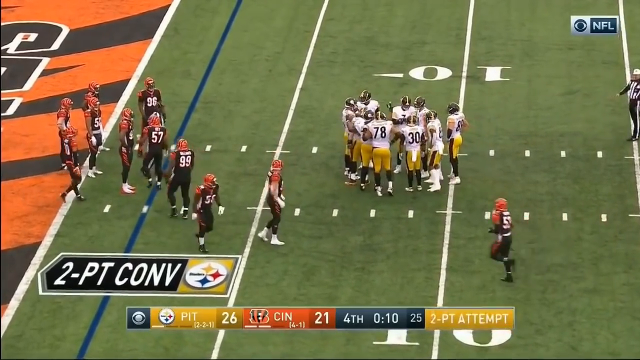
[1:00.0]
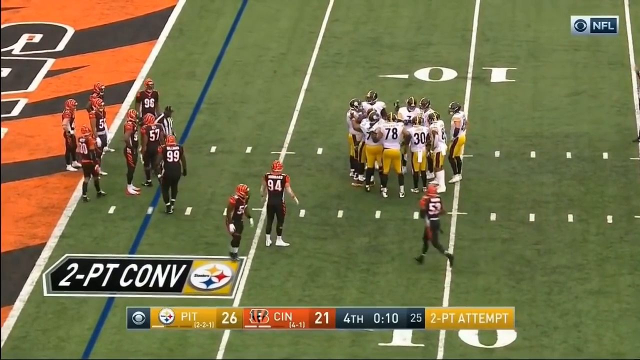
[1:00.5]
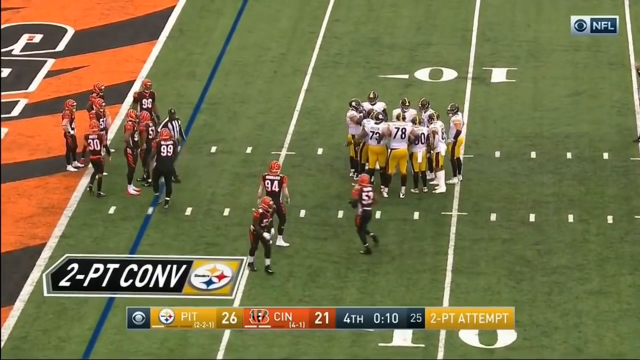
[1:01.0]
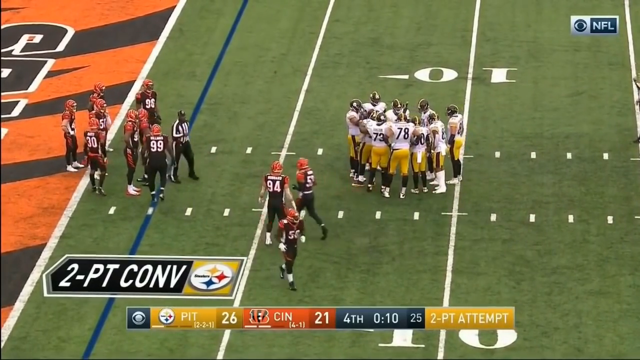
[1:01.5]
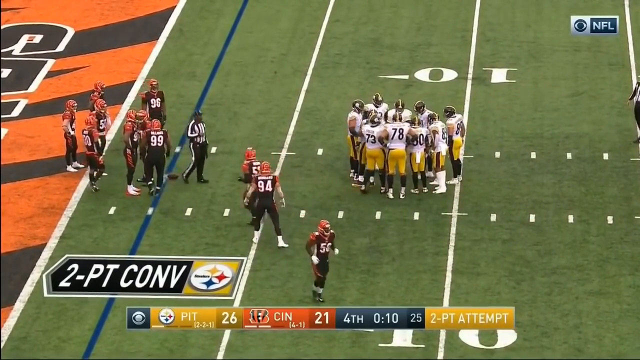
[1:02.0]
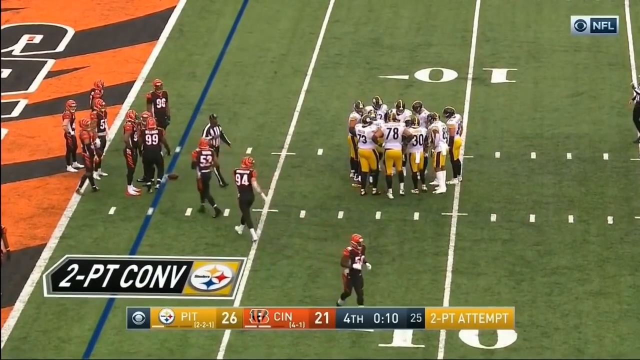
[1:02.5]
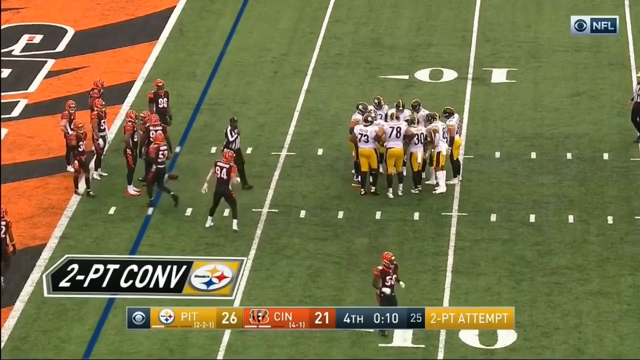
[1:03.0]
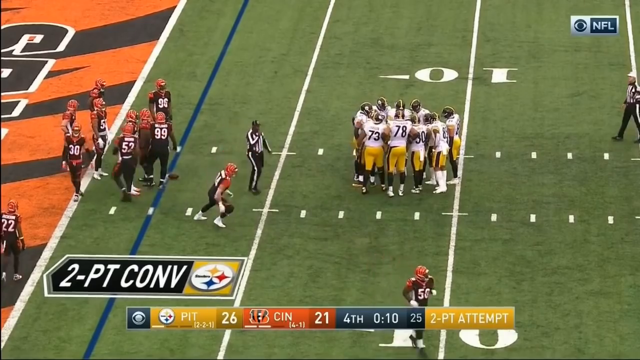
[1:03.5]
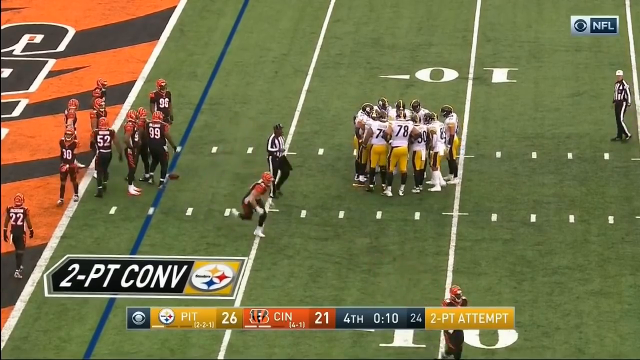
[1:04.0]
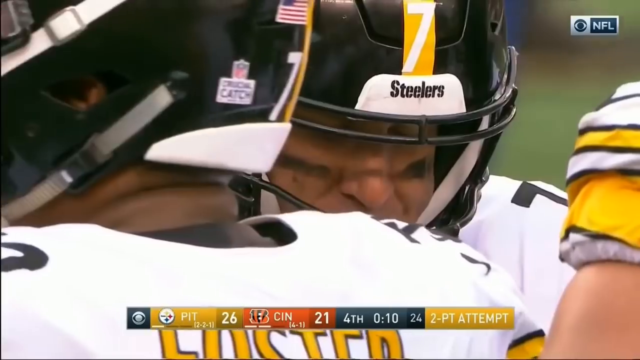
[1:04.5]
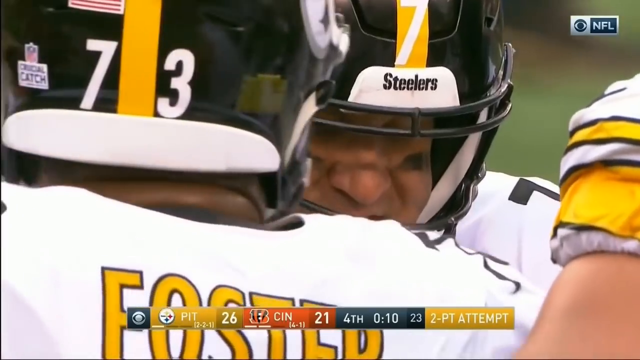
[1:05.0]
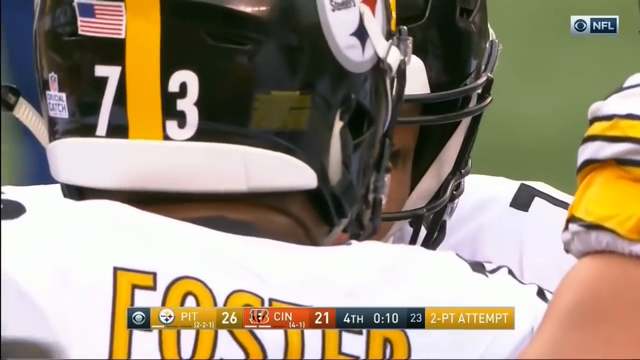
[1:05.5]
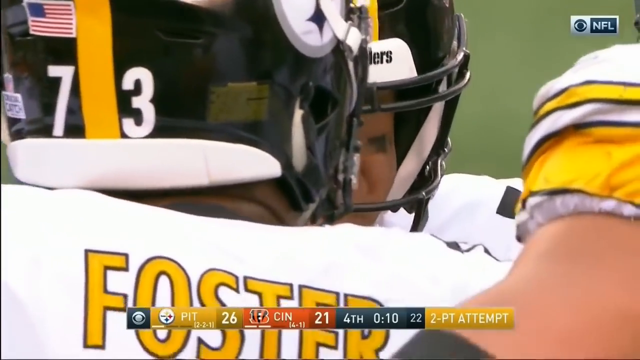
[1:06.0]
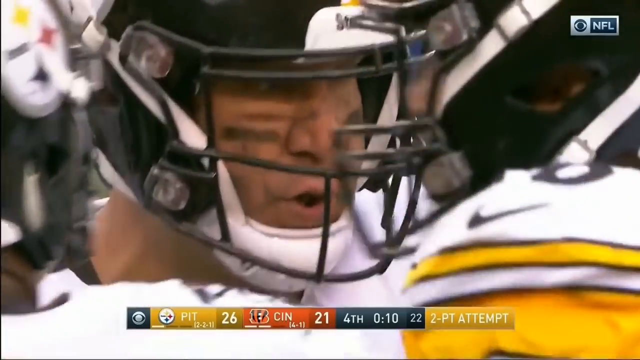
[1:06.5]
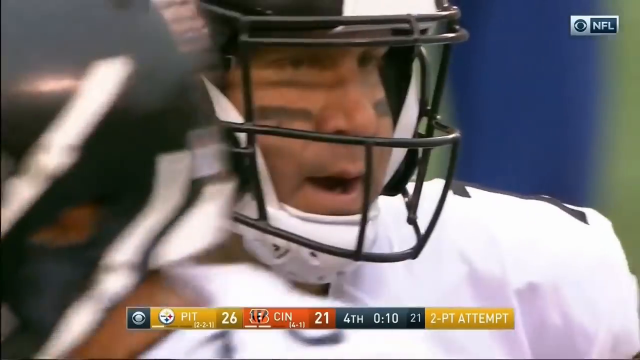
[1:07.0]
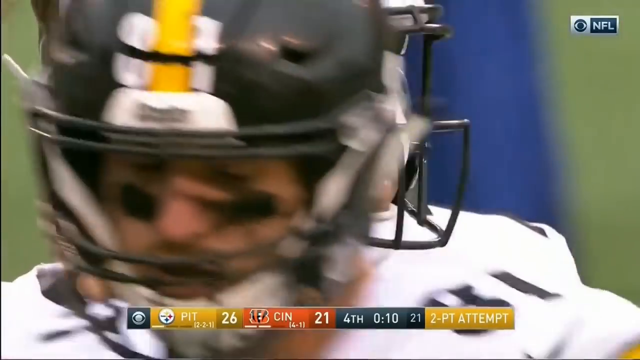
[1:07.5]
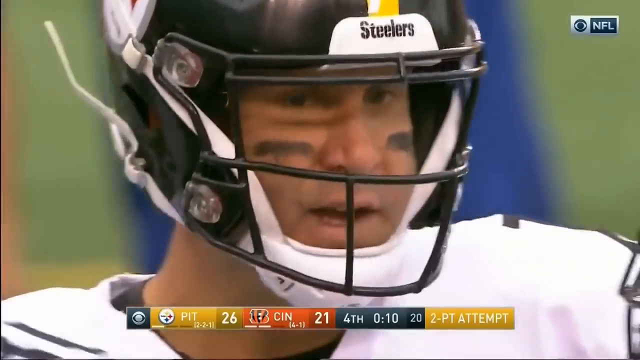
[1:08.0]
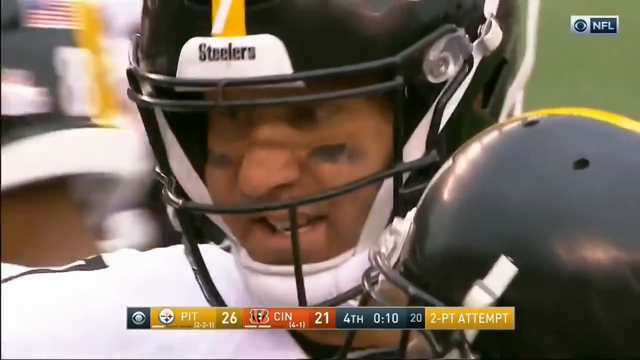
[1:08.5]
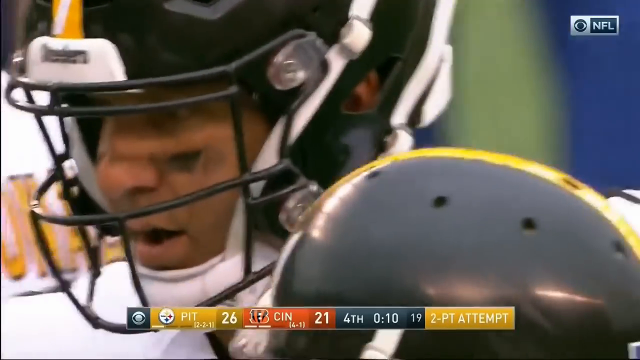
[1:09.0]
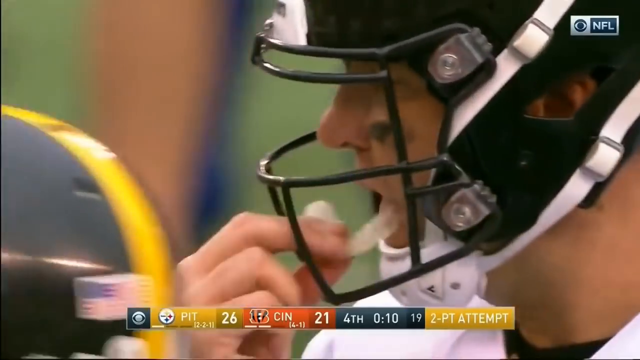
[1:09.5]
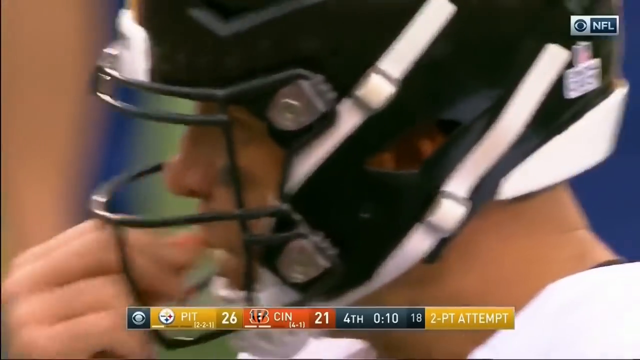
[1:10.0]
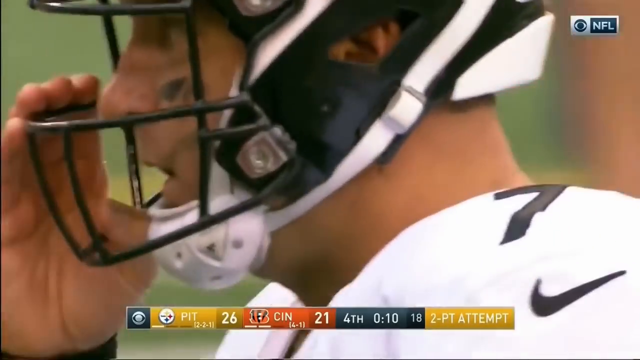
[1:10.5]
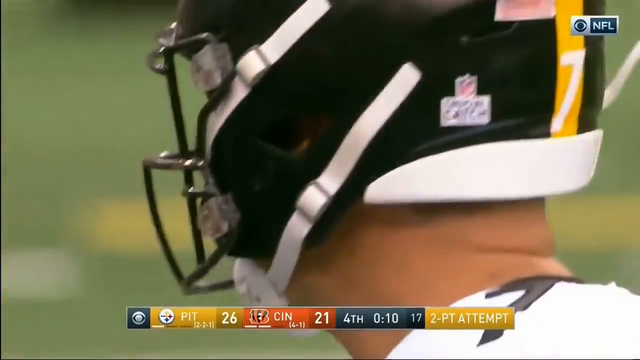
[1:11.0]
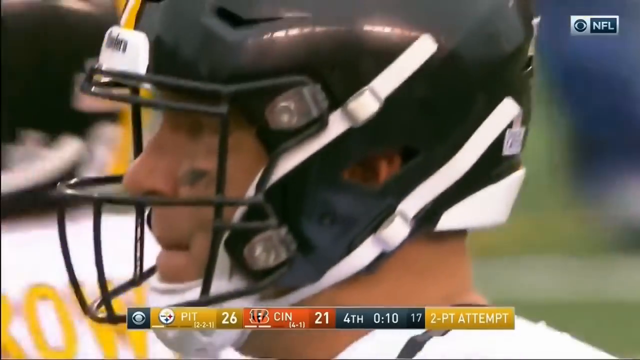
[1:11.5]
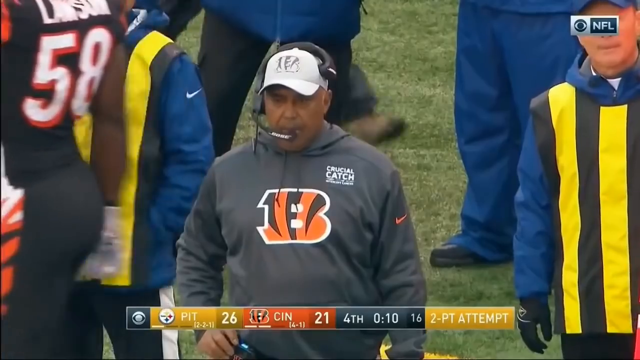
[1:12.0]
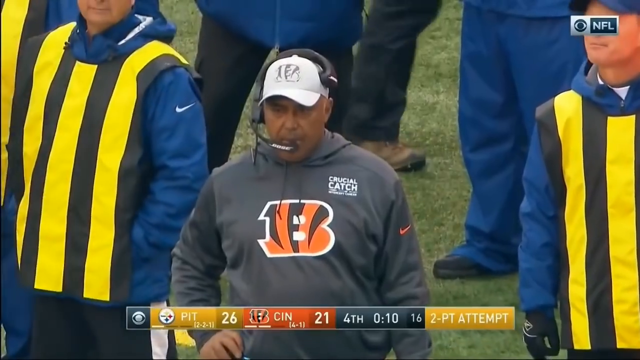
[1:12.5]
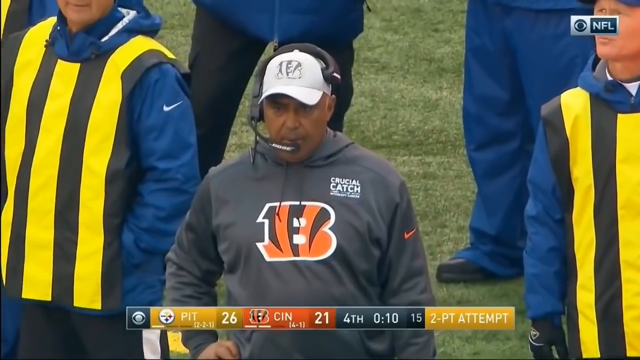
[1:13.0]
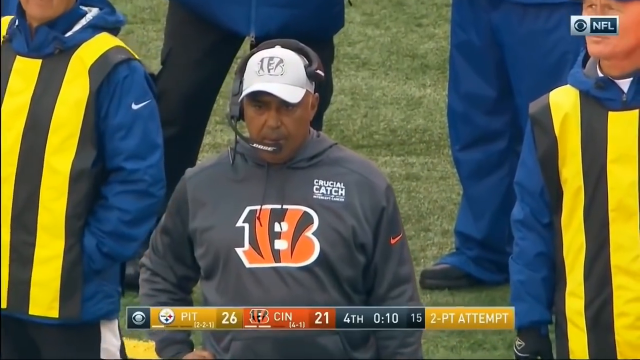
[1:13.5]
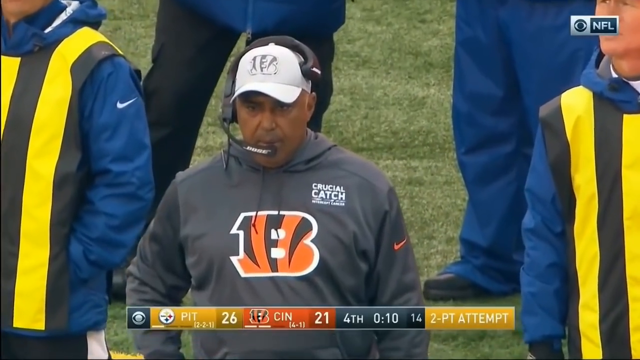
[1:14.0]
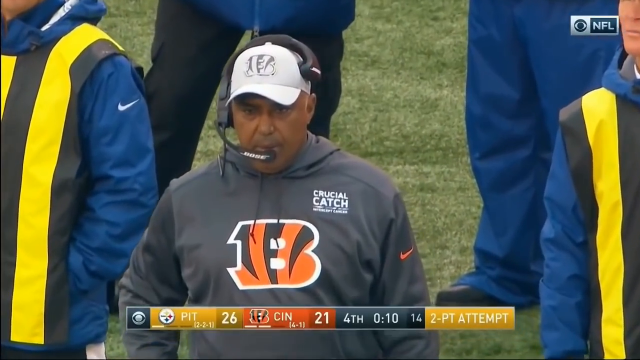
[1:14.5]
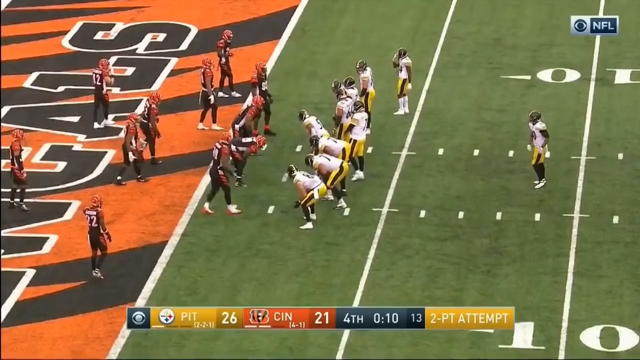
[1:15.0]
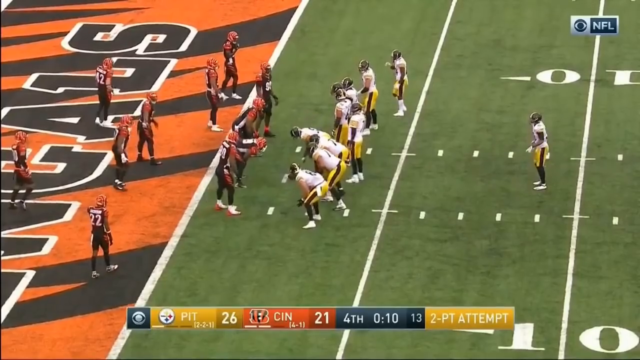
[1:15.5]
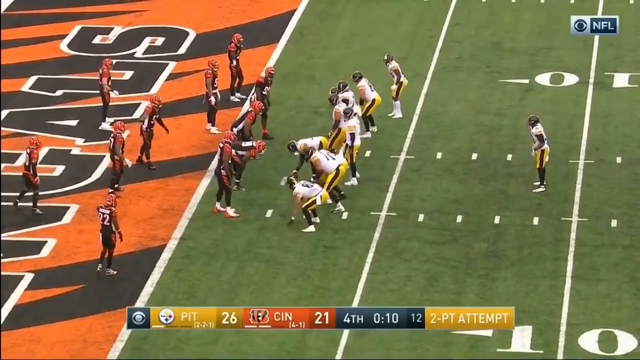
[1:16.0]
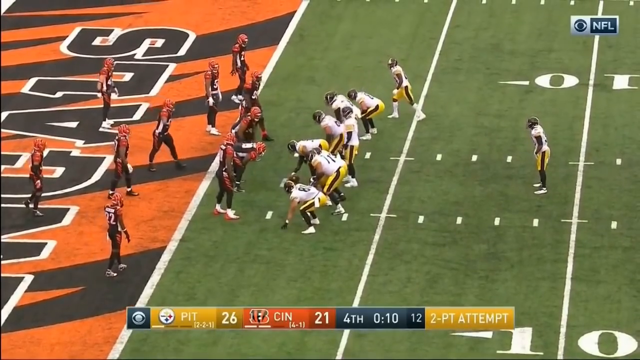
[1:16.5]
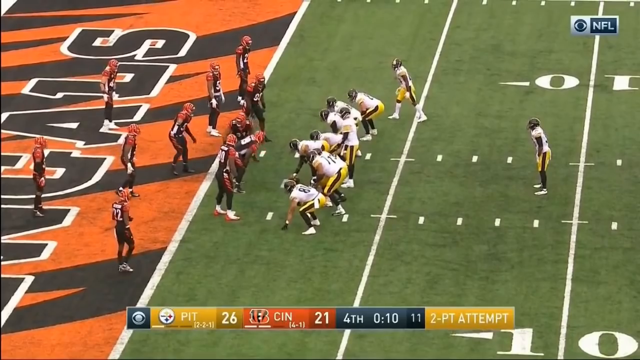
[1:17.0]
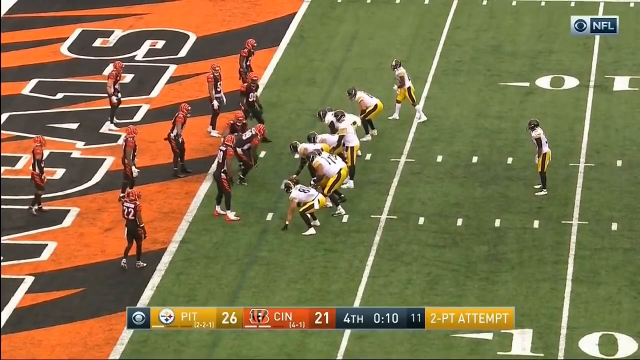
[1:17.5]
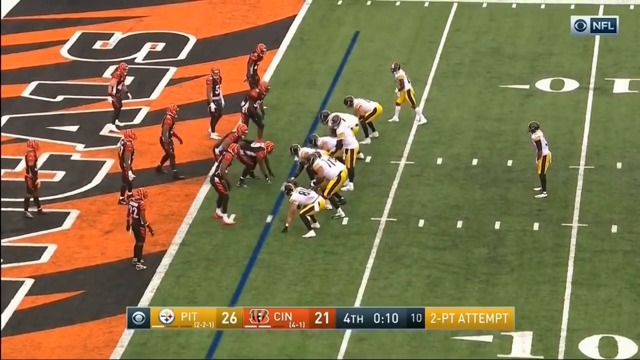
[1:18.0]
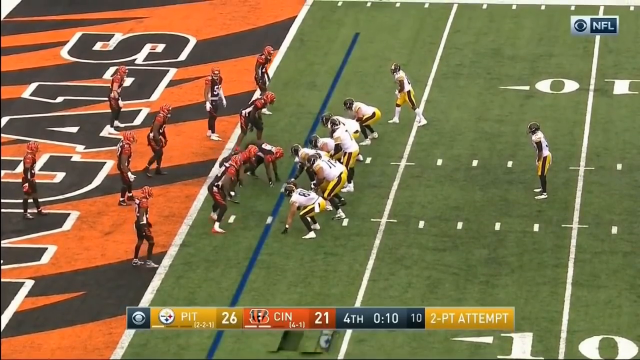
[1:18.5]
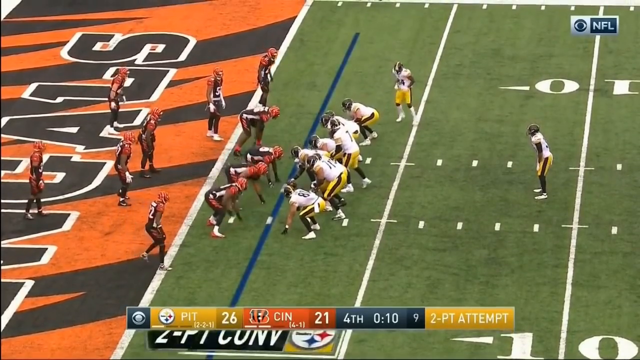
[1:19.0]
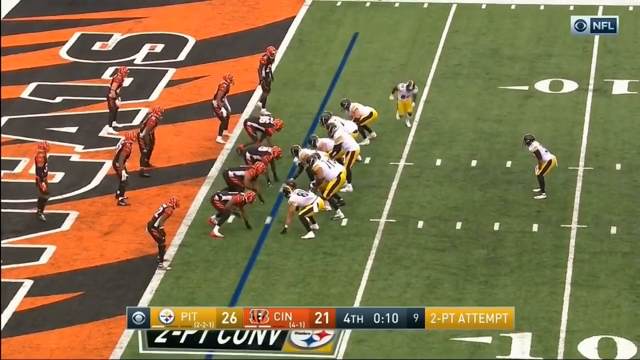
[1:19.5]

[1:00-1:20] A group of players stands around. The Steelers are huddled in a kind of loose circle, while on the left the Bengals players are scattered around, seemingly getting ready for a play. Text in the bottom left of the screen reads "two-point conversion", and a blue line superimposed on the field at the two-yard line marks the line of scrimmage. The Steelers appear to be in a huddle discussing the play. A referee walks on the field. The camera zooms in close to the faces of the players in the huddle, who are talking to each other, though what they say cannot be made out. The back of a head is visible; the helmet shows number 73 and has an American flag on the back.